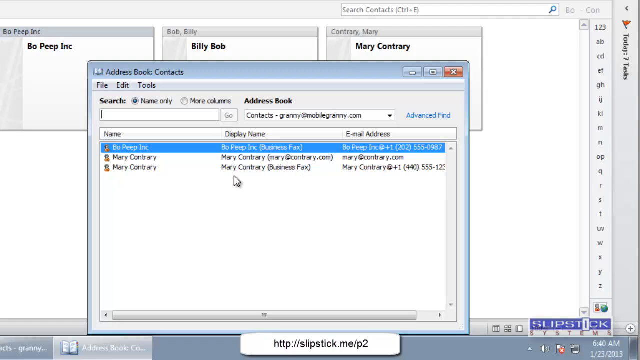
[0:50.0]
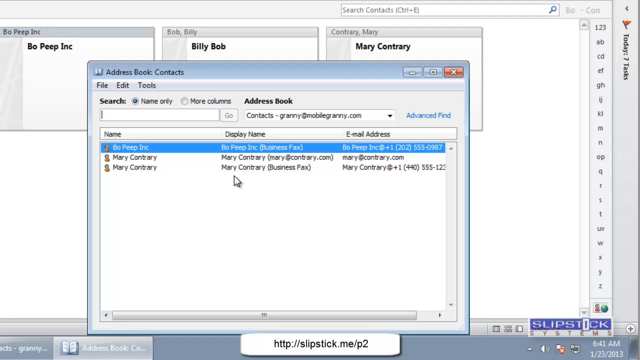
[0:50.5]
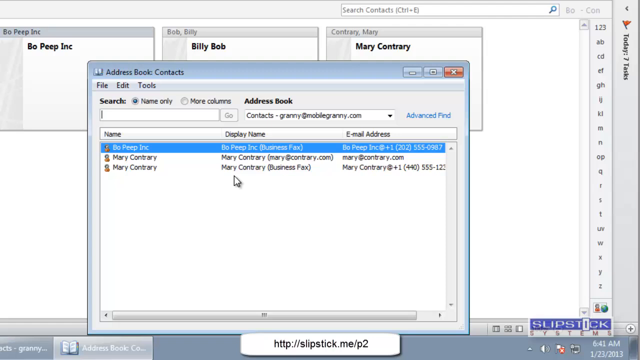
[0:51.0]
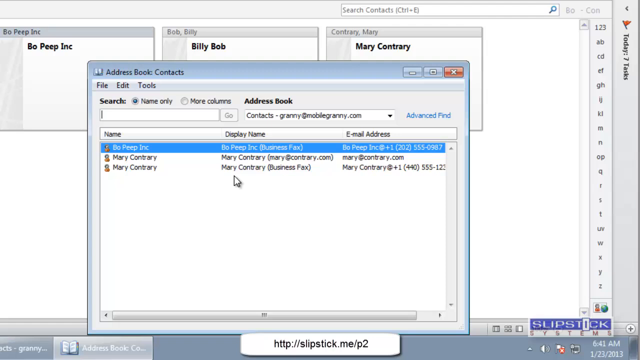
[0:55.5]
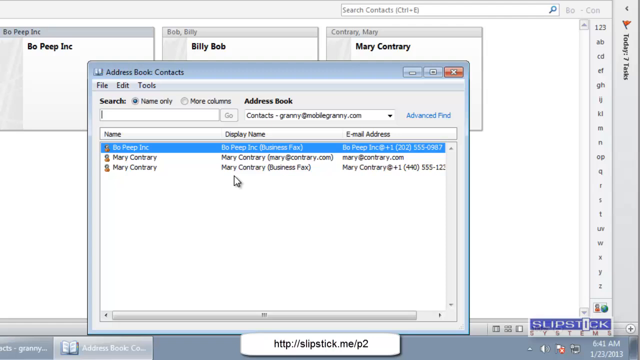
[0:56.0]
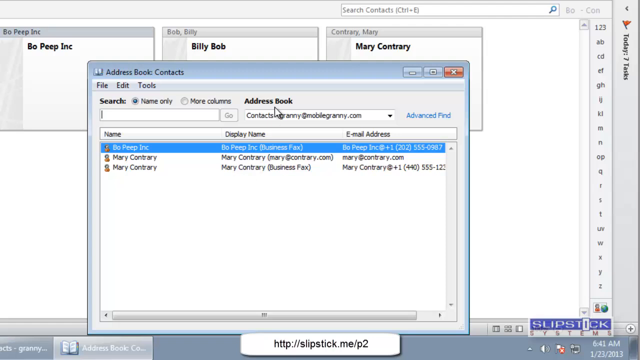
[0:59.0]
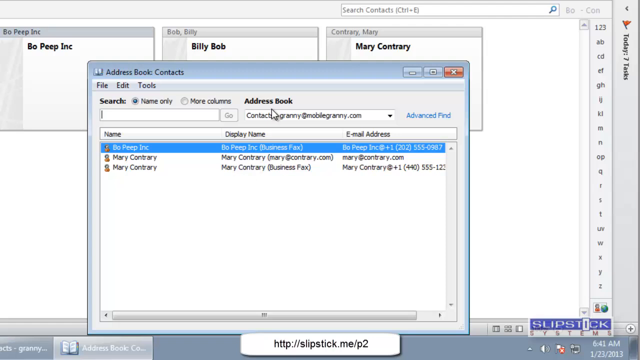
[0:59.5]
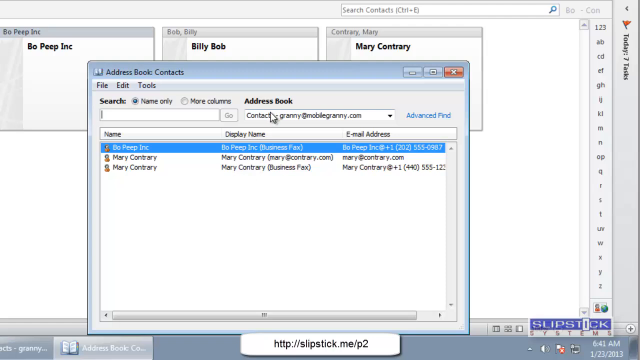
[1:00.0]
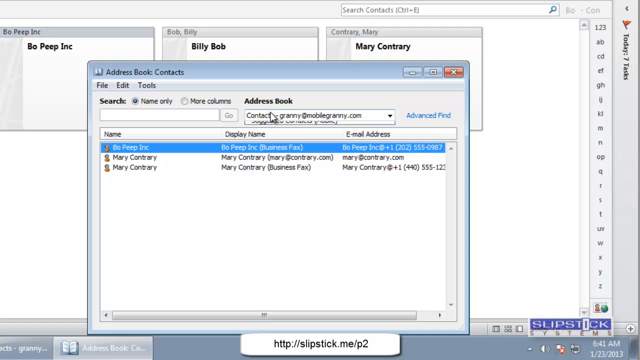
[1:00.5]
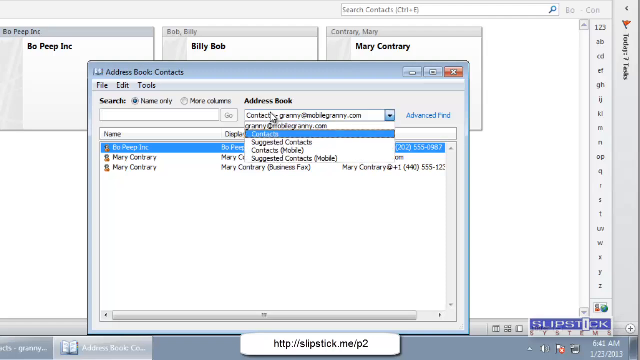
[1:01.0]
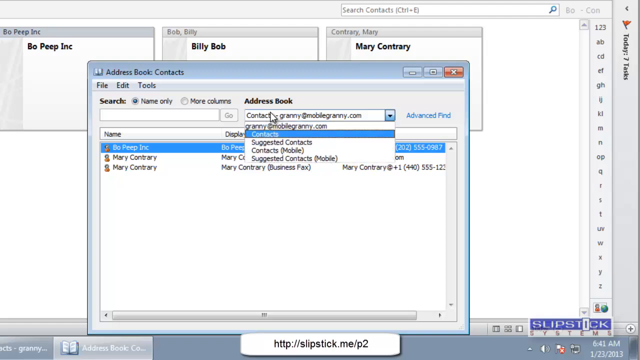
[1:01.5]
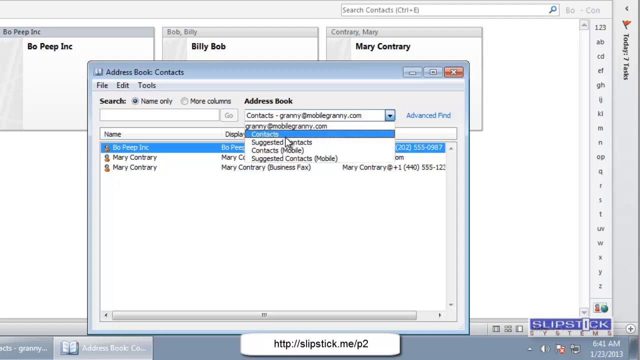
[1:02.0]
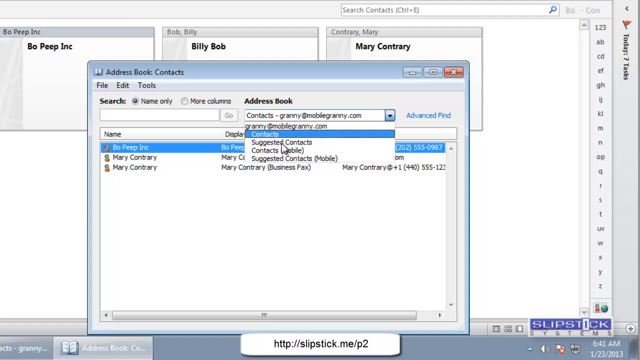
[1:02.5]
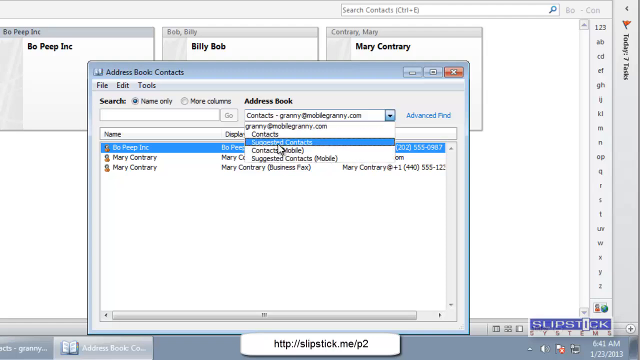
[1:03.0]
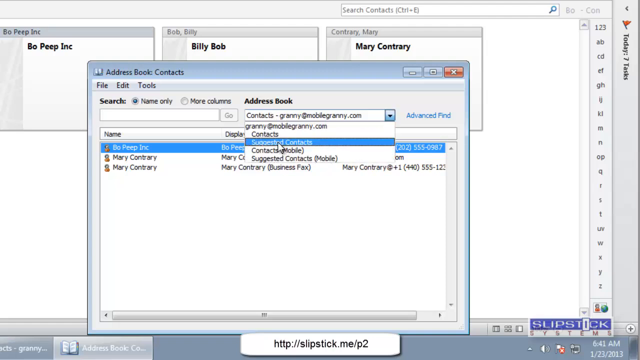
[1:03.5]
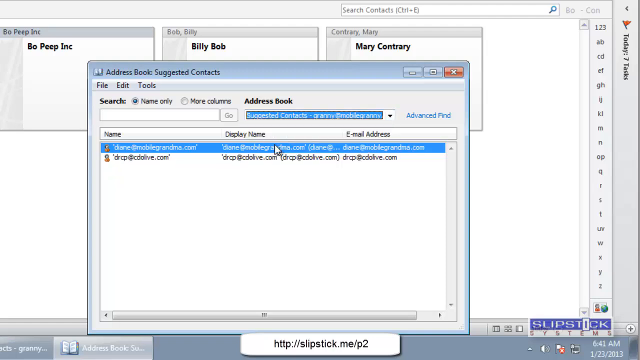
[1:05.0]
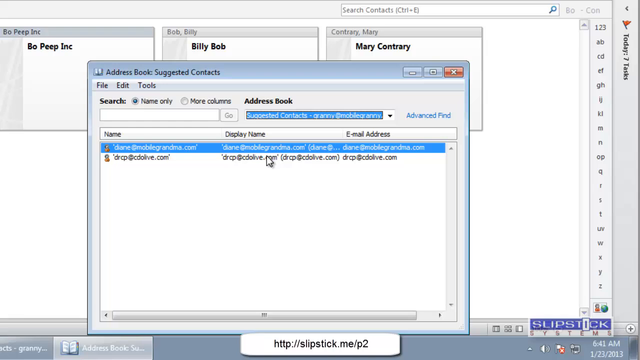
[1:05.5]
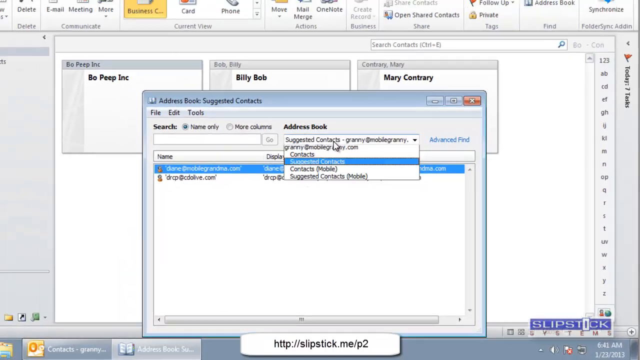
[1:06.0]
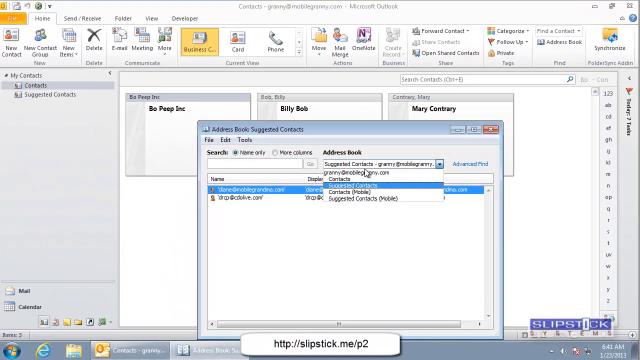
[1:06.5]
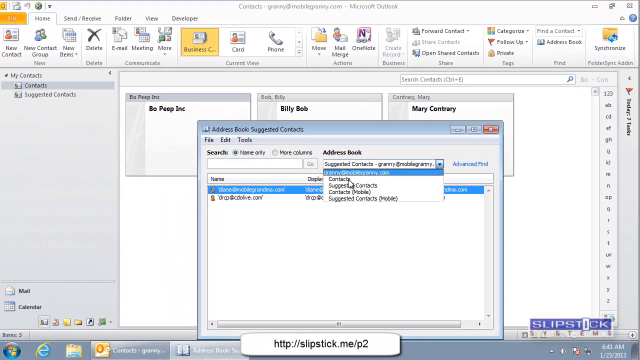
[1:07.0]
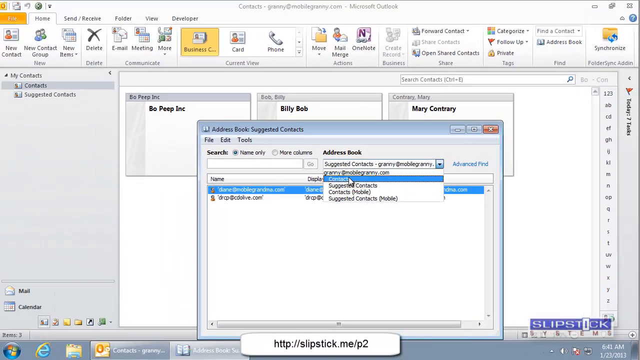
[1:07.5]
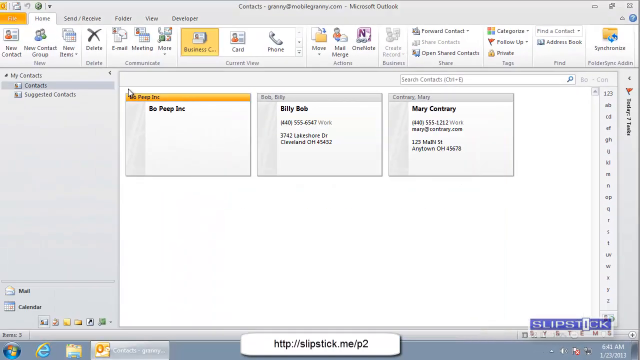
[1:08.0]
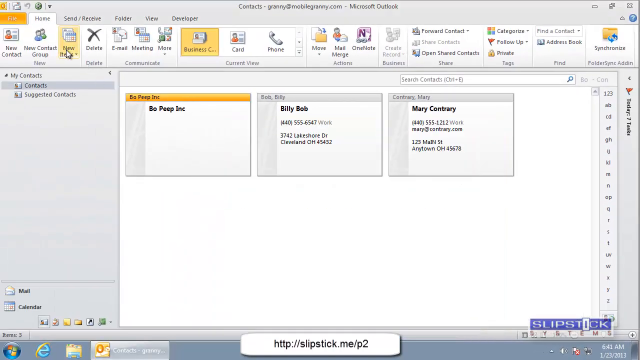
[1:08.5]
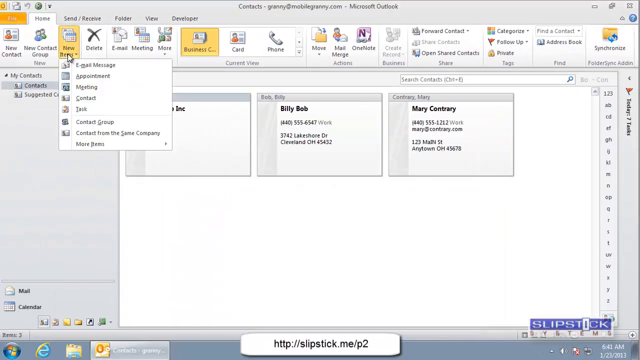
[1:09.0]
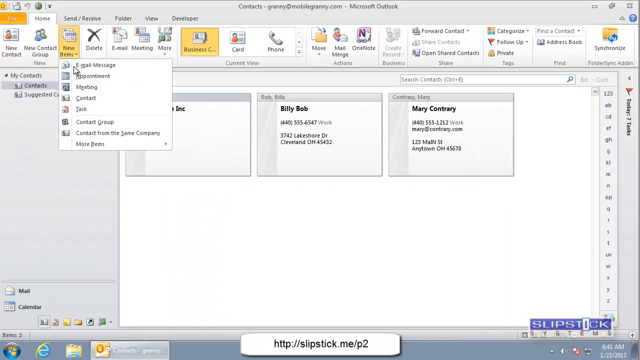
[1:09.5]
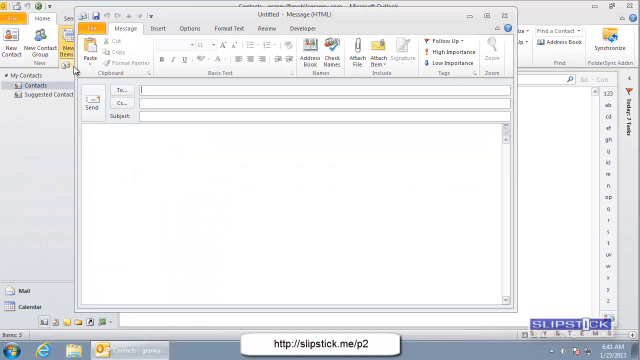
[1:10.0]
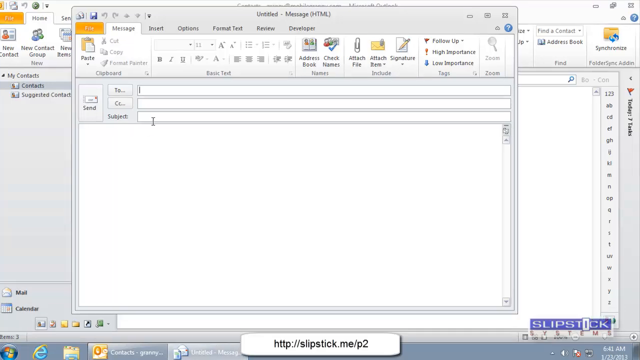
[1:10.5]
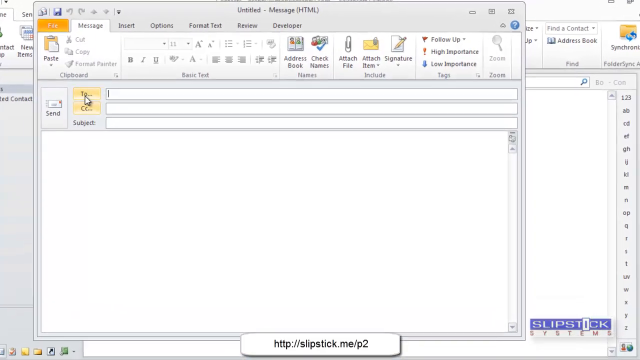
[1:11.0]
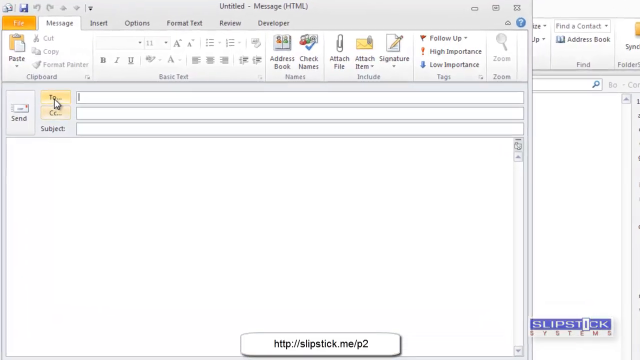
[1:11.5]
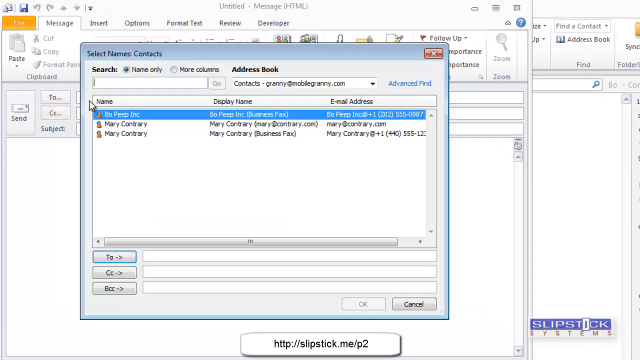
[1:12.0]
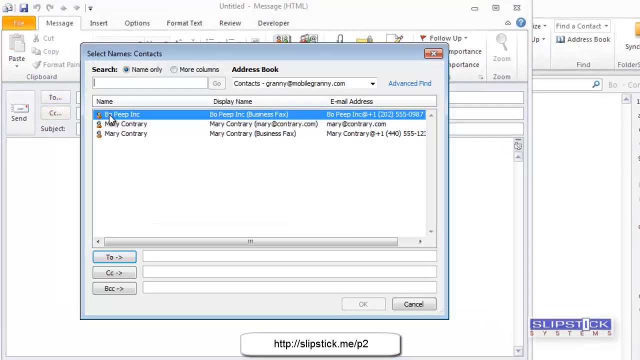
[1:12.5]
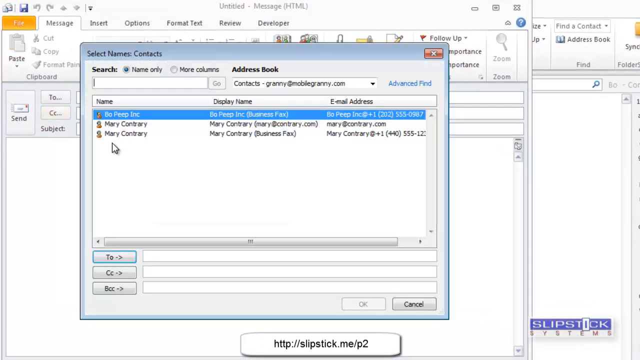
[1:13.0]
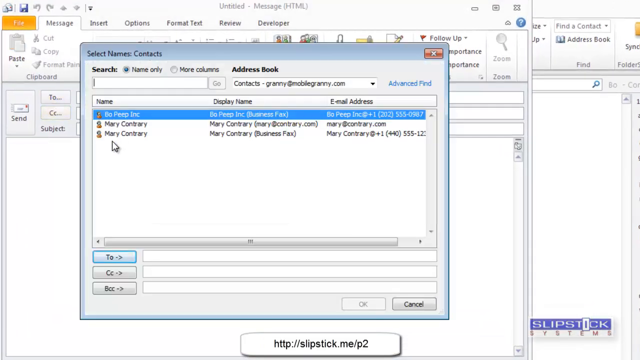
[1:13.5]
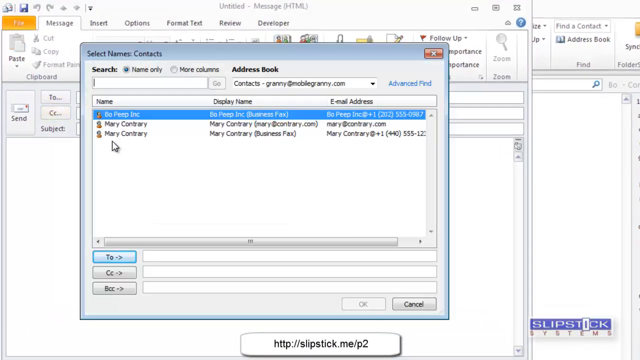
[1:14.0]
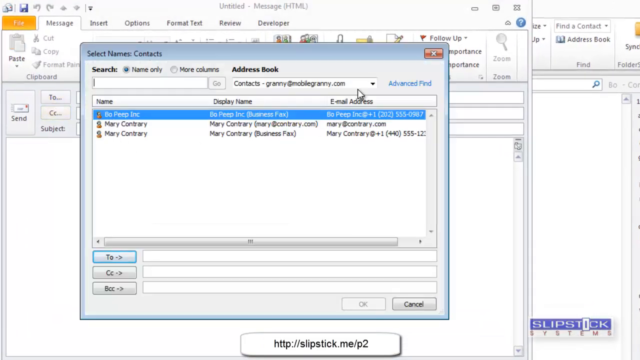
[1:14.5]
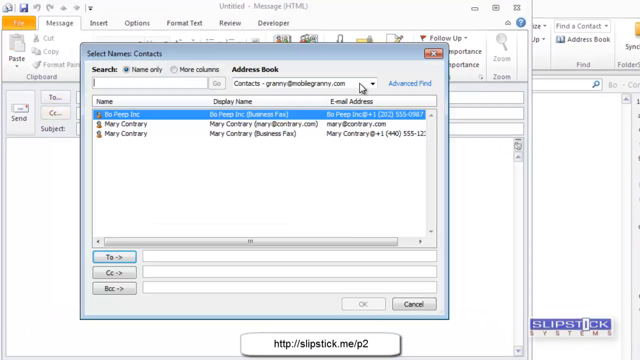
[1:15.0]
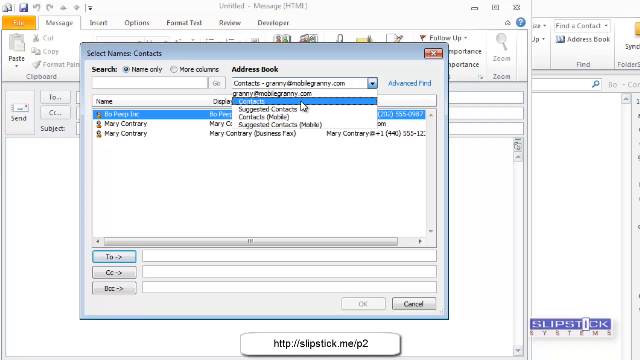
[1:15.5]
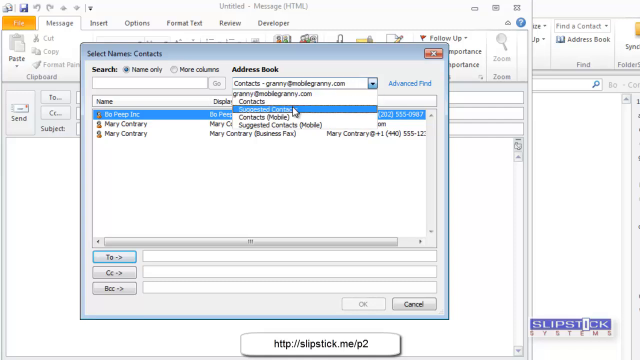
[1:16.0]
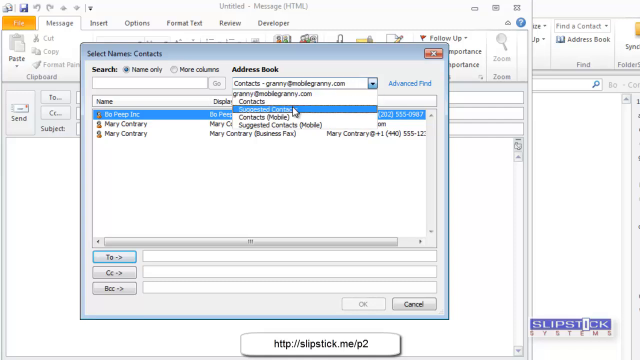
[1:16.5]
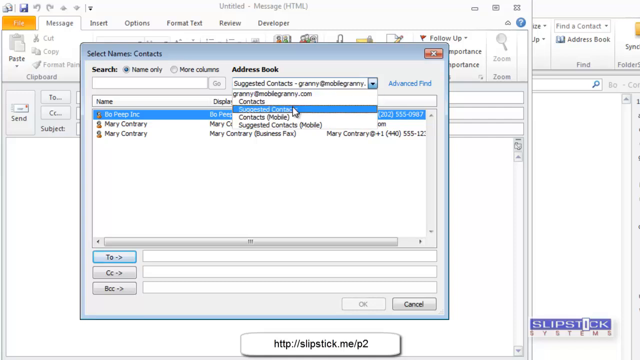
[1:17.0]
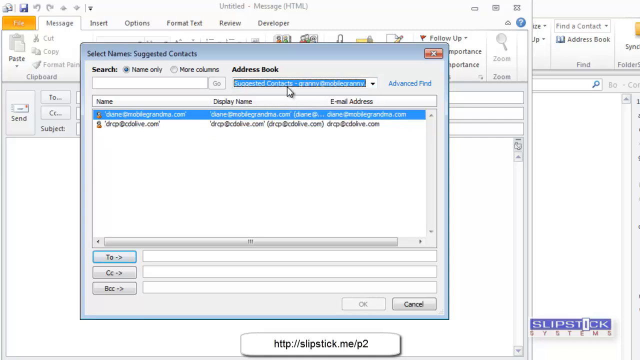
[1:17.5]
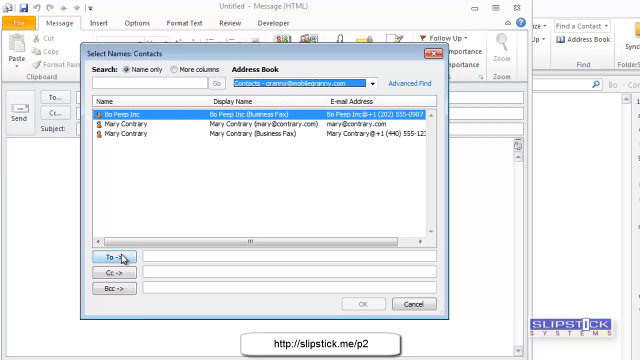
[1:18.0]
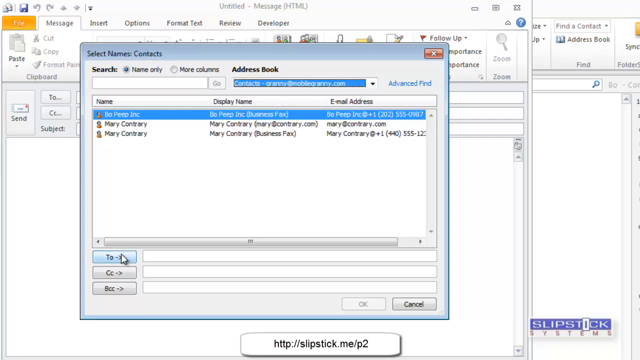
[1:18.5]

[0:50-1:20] The user looks through the address book and contacts, which have columns for name, display name and email address. The first entry is Bo Peep, Inc., with the display name Bo Peep, Inc. and "business fax," and the email address entry is a phone number, "202-555-0987." Below that, under name, is Mary Contrary, with the display name Mary Contrary and an email address at MaryContrary.com. On the third line, Mary Contrary appears with Mary Contrary business fax and another phone number. The user then goes to Contacts and opens a drop-down menu with options for Contacts, Suggested Contacts, Mobile Contacts and Mobile Suggested Contacts. They appear to scroll through it and click on Suggested Contacts, which brings up a blank window, then go back to the contacts they were viewing before.